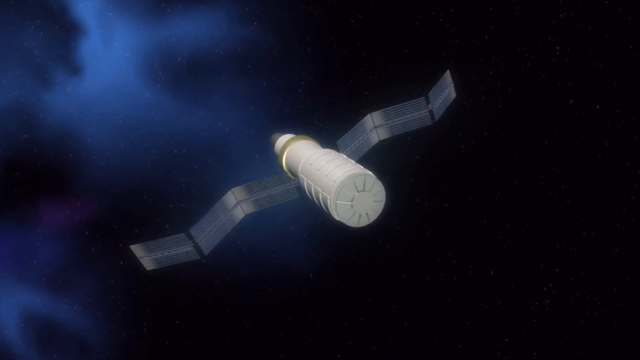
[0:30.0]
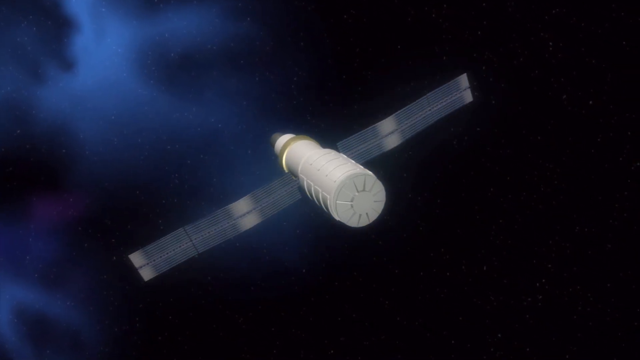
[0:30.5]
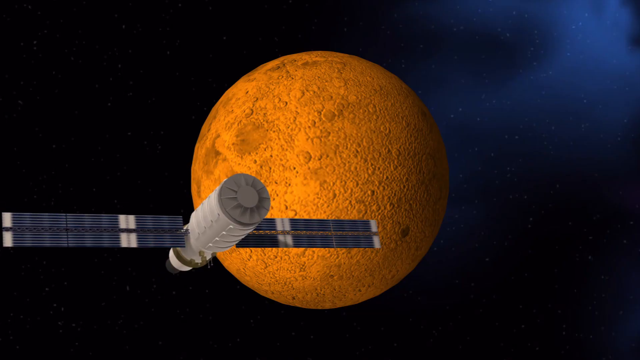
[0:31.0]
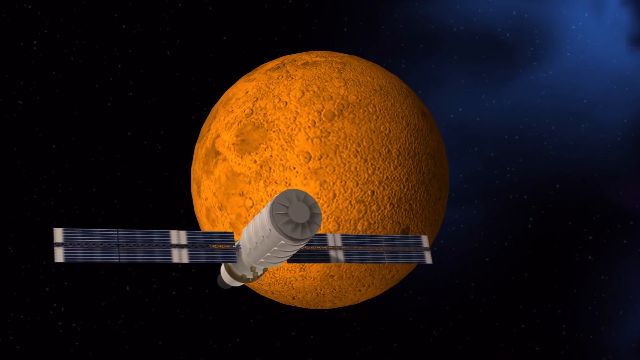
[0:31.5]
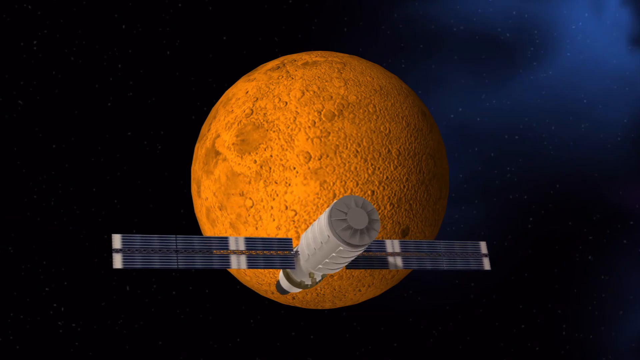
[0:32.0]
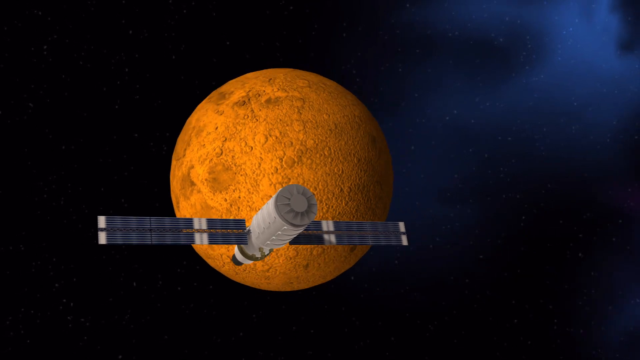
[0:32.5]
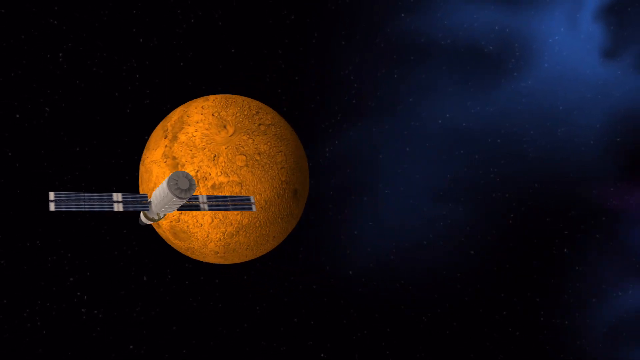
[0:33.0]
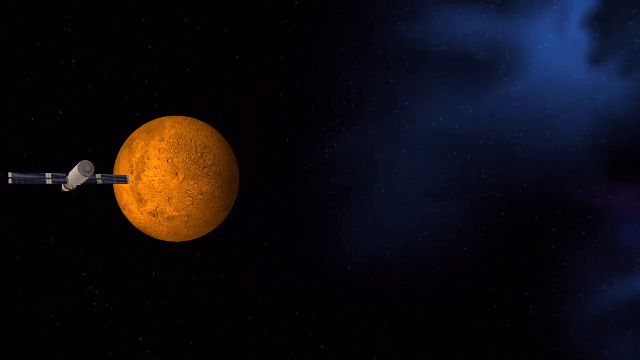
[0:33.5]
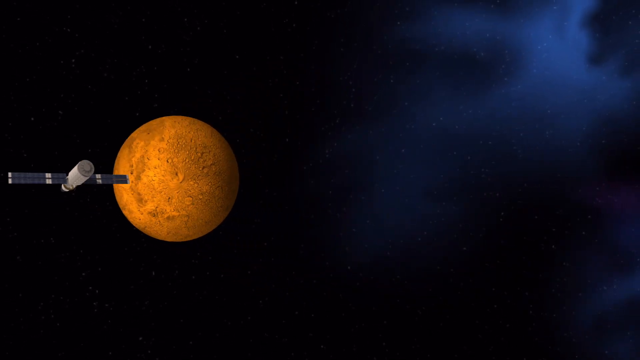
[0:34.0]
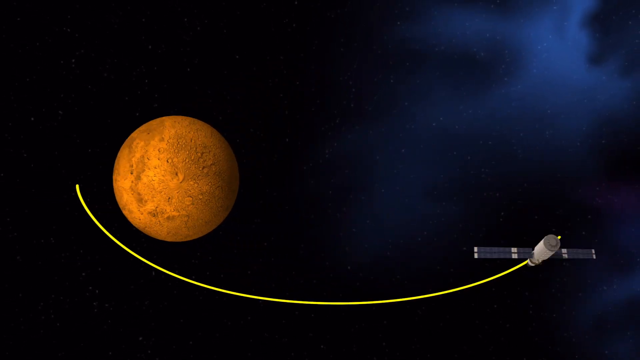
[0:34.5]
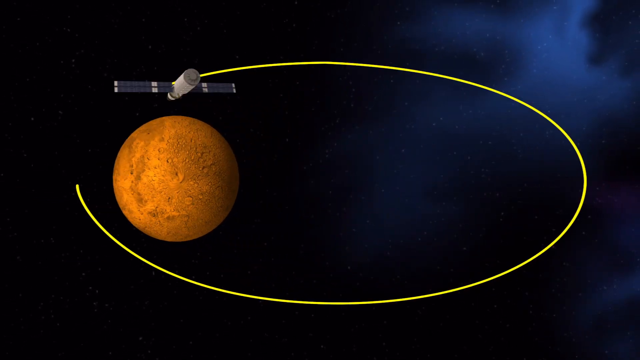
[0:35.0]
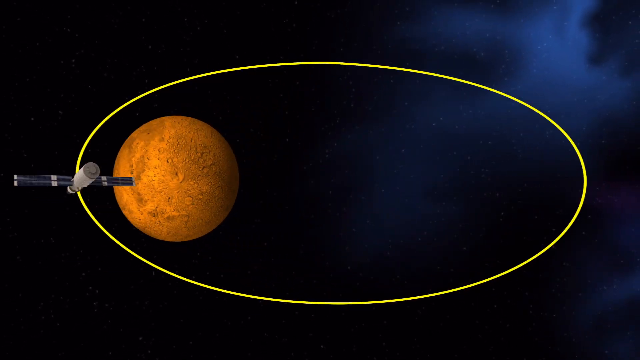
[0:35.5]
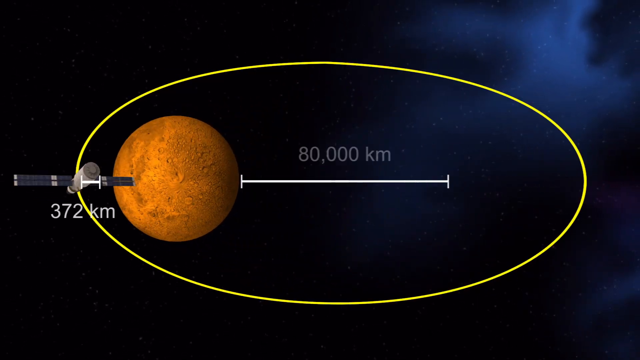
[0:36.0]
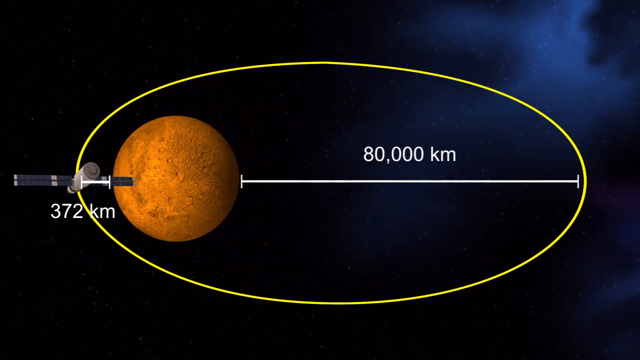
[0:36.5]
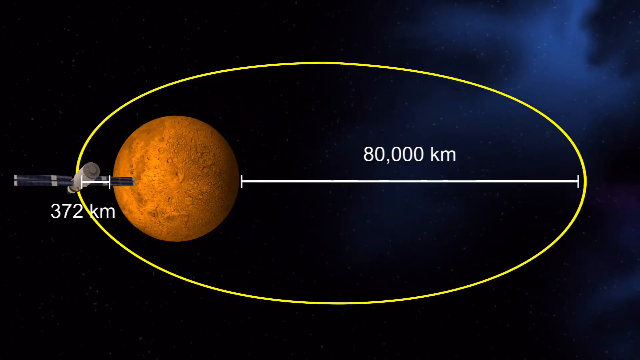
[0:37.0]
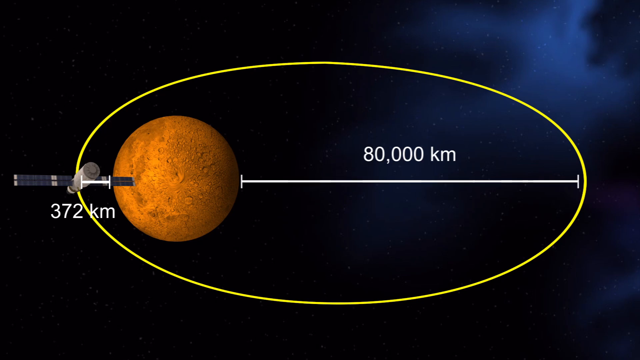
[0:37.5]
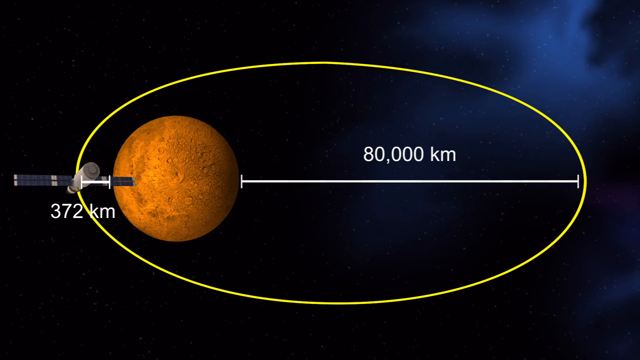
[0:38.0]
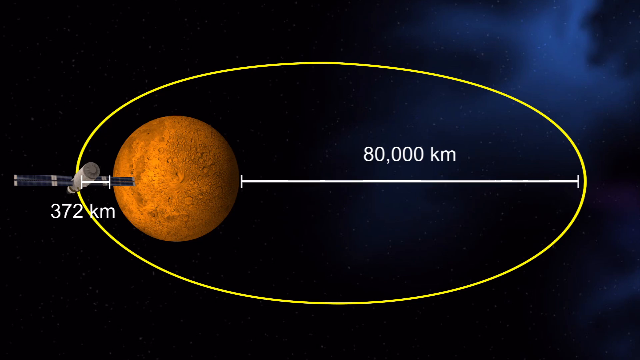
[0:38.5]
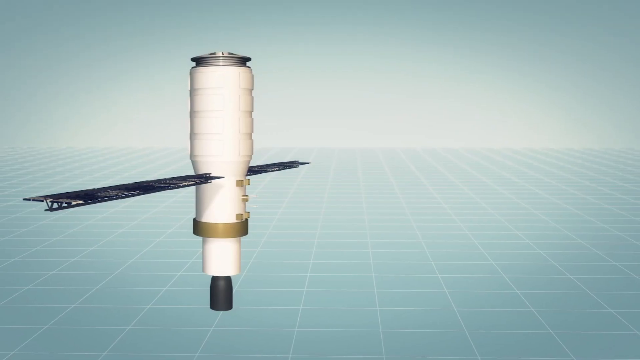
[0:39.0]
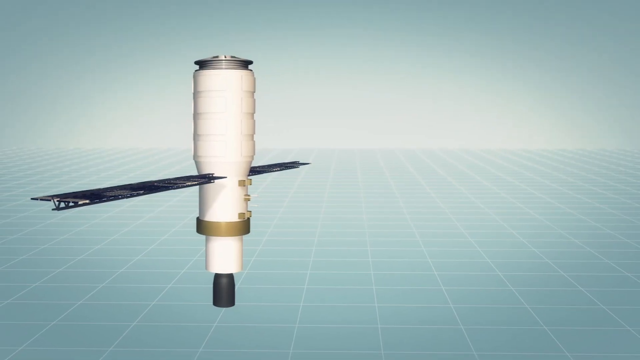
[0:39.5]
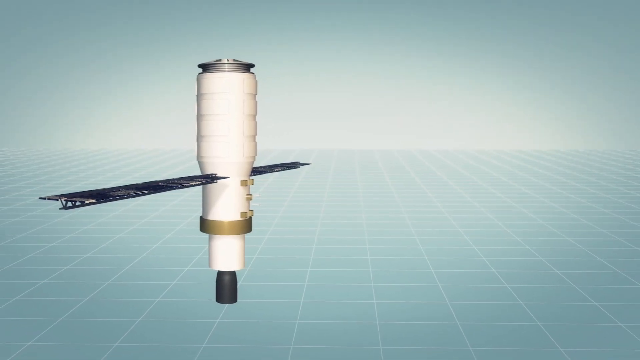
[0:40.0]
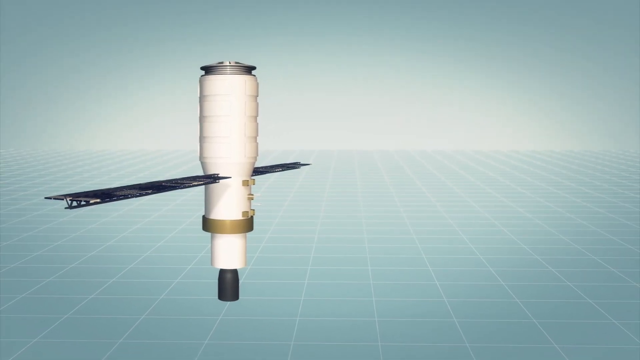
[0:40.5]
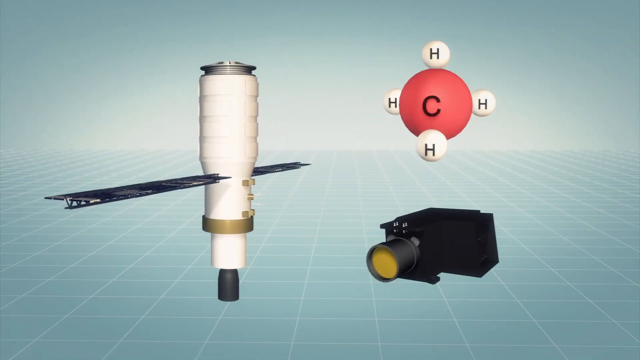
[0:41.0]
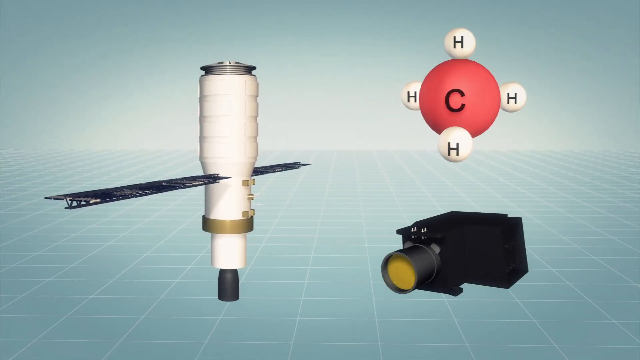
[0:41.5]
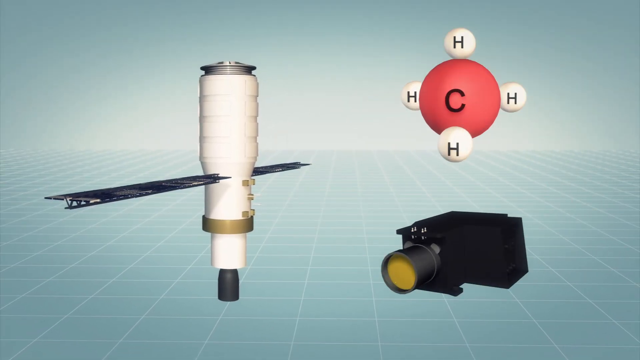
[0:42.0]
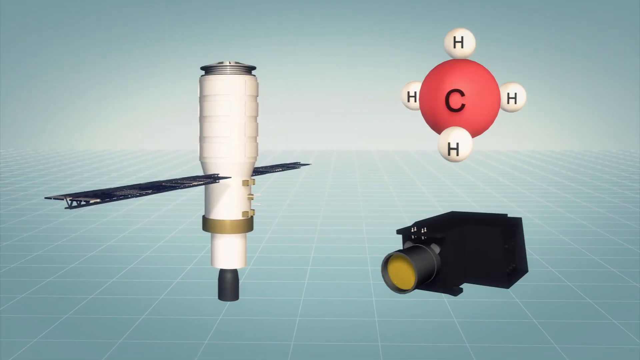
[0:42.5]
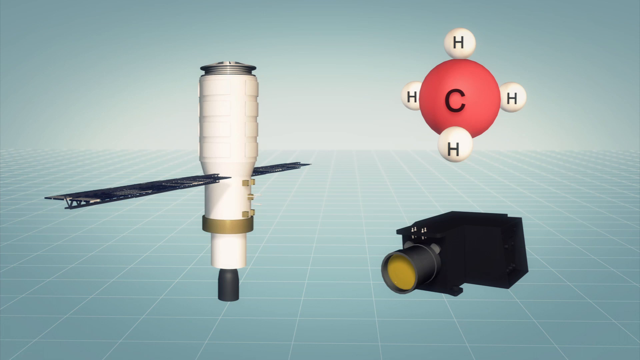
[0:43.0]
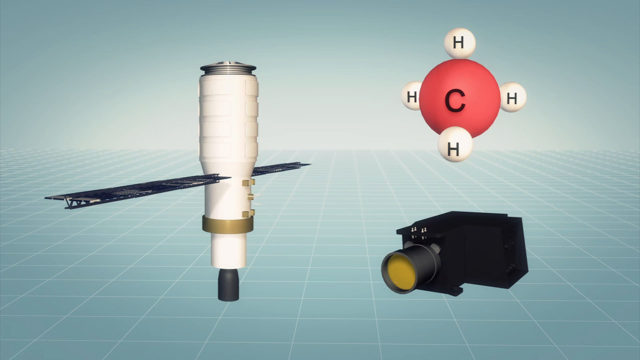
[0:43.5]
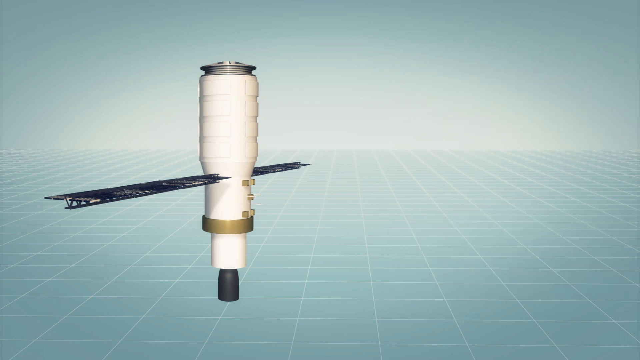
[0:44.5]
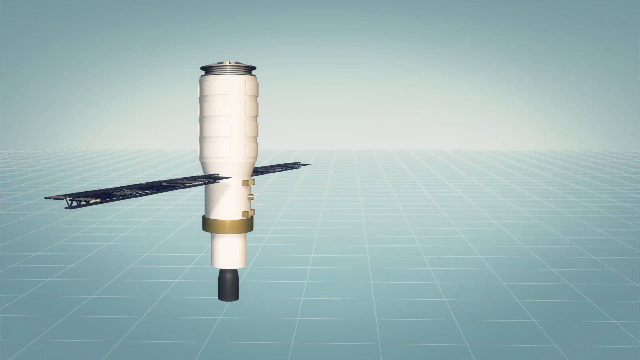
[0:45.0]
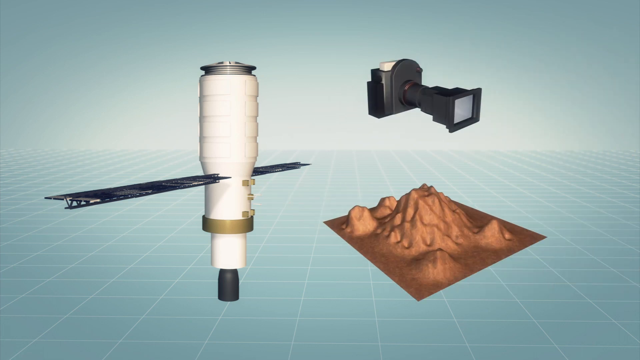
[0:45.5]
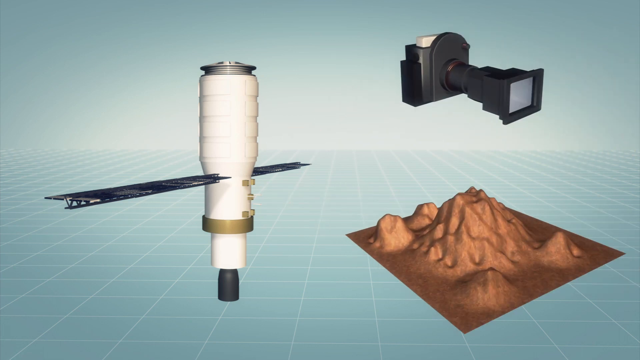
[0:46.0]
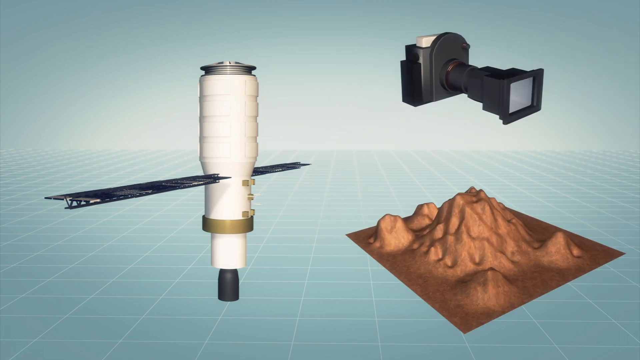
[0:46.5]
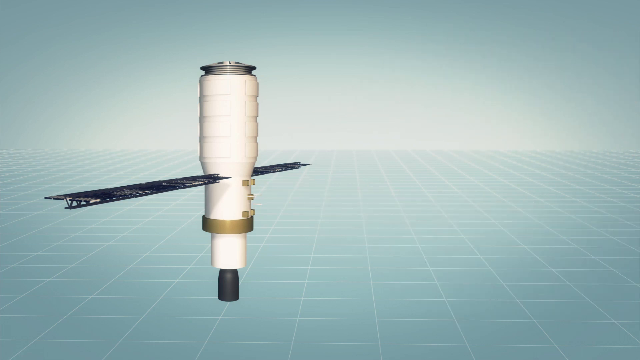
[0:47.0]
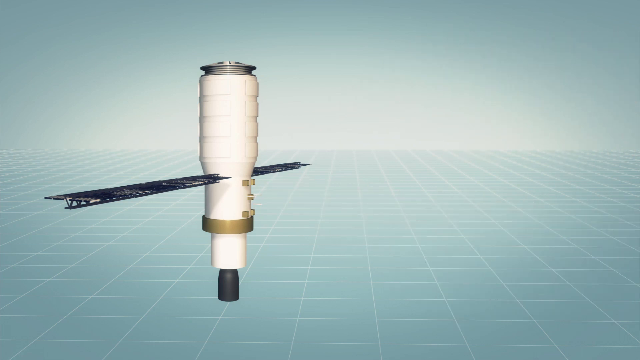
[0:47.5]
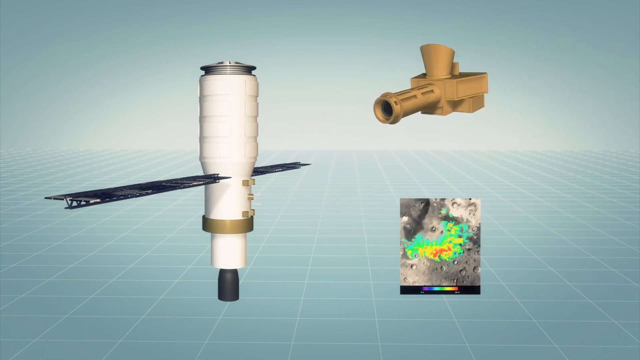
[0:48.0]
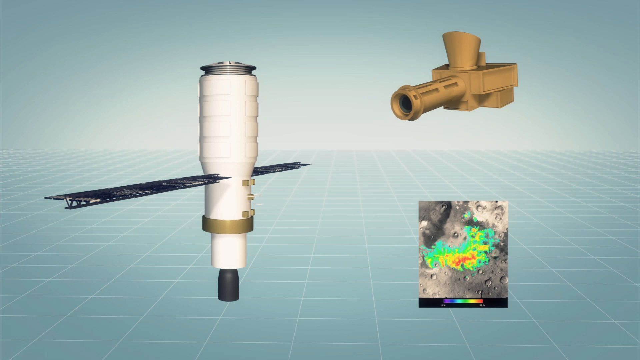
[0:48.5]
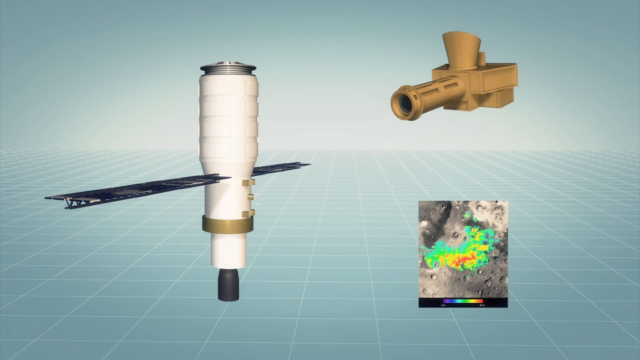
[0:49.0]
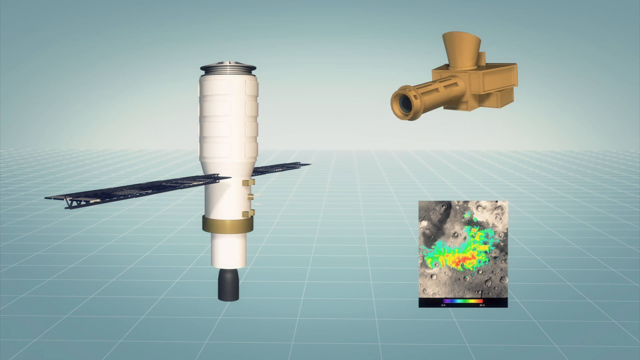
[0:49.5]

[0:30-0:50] The front part of the antenna has a circular surface with a bunch of ridges and edges all around it, almost like the textured body of a bottle without its label. Rectangular panels all around it are smooth and almost embossed, standing up a little. There appear to be three sets of panels on the left or right side of the satellite's main body. The satellite kind of swoops into view in front of the orange planet, which is kind of rotating toward the viewer. The satellite, tilted more to the left, appears to go around the planet counterclockwise in an elliptical orbit, closer on the left side than on the right, with almost 400 kilometers at its closest point and 80,000 kilometers at its furthest. The satellite is then shown vertically, sitting on a black cylinder base. To the right is something like a projection camera: a black device with a scope coming out and a yellow lens. Above it is some kind of molecule with one carbon part that looks like a large red bouncy ball and four hydrogen parts, each a single letter H, all sitting on a grid. After a flash, a crater shows the surface of the orange planet, with kind of spiky rocky mountains and a few slopes. Next comes a camera with a weird, squared aperture that starts as a cylinder and comes out in two sizes of cubes, smaller then bigger, followed by a similar medium brown one with a large round piece that is opened. There is also something almost like a doppler radar precipitation map used in meteorology.